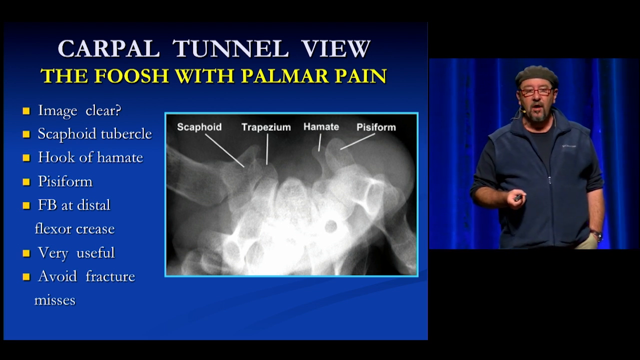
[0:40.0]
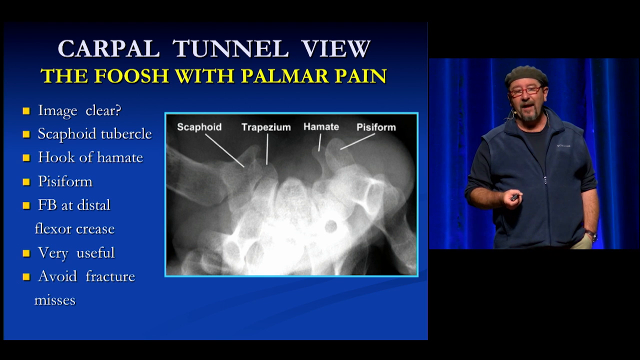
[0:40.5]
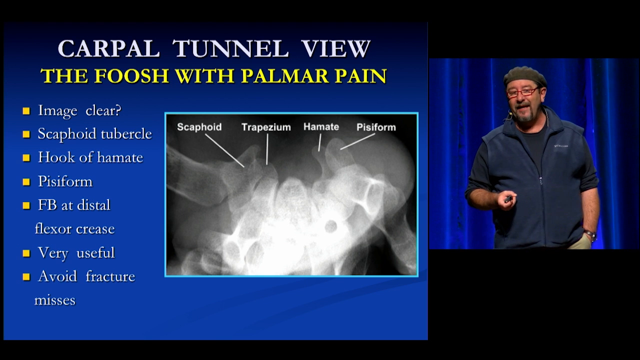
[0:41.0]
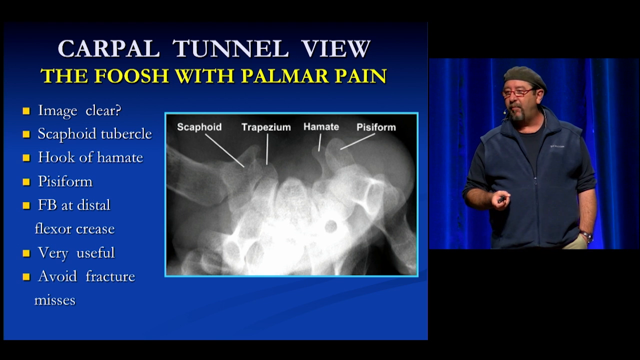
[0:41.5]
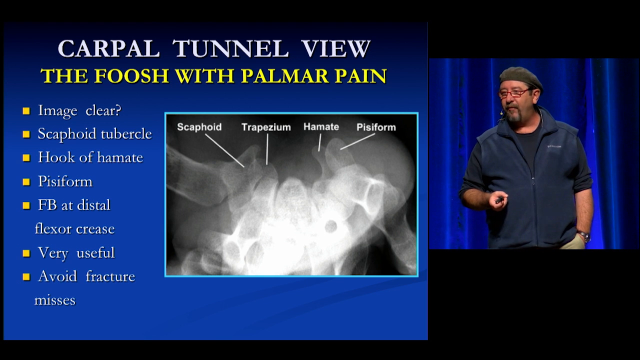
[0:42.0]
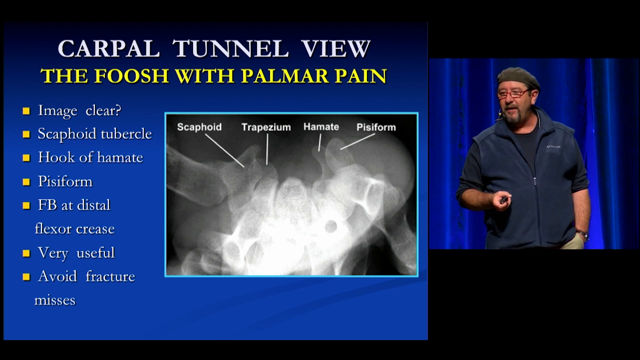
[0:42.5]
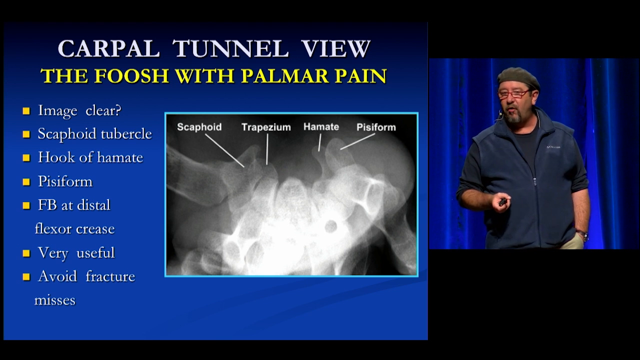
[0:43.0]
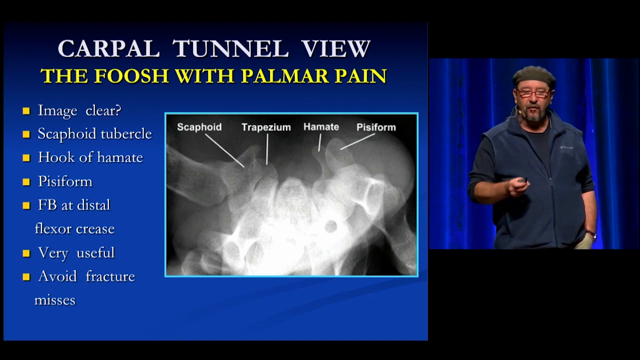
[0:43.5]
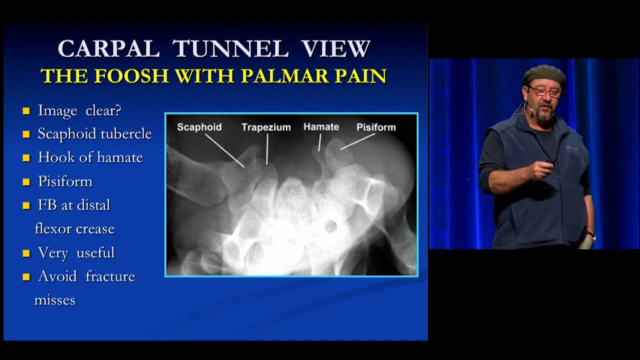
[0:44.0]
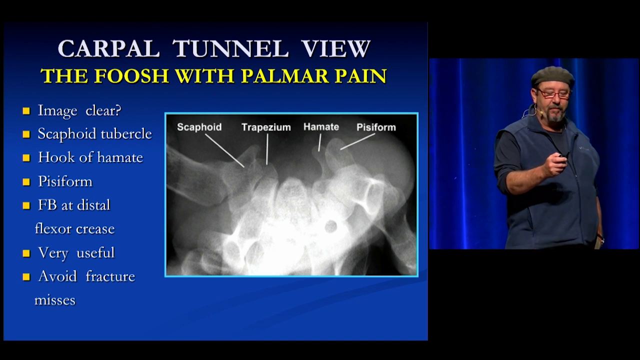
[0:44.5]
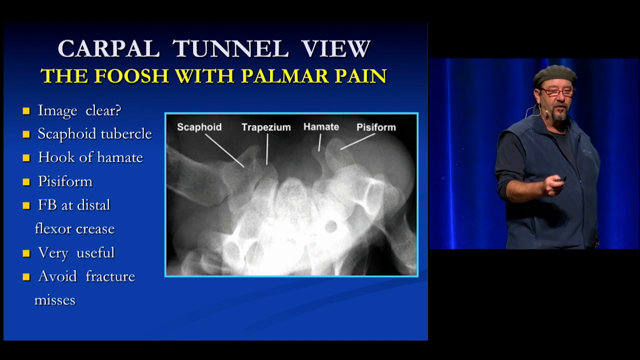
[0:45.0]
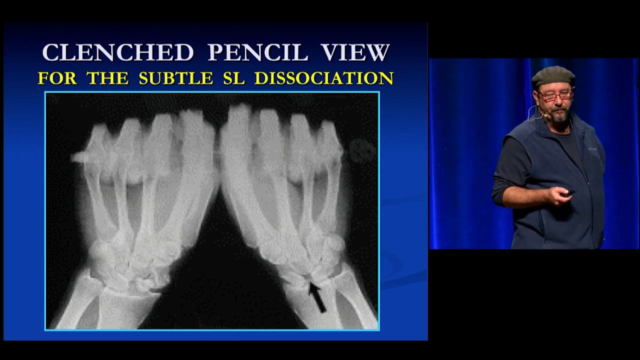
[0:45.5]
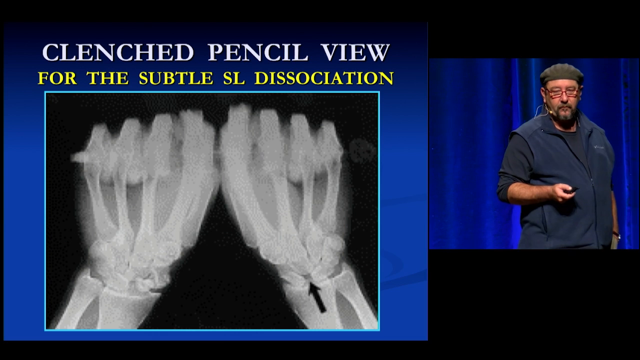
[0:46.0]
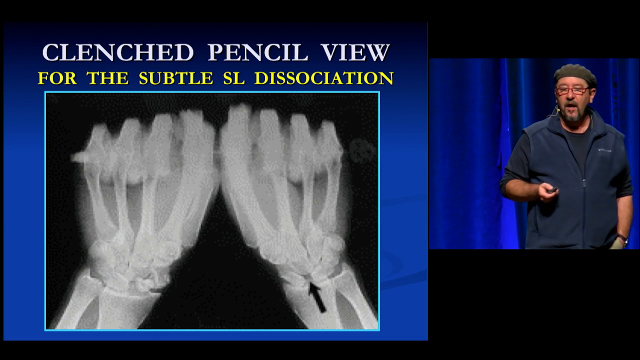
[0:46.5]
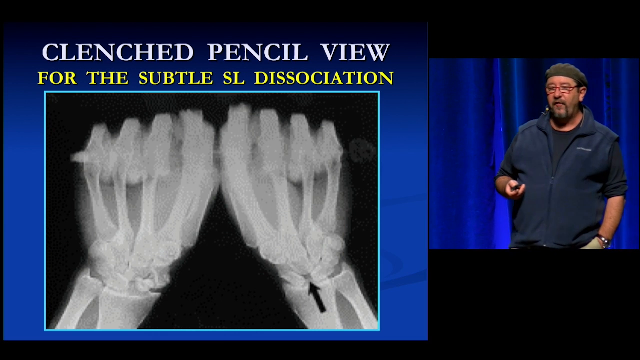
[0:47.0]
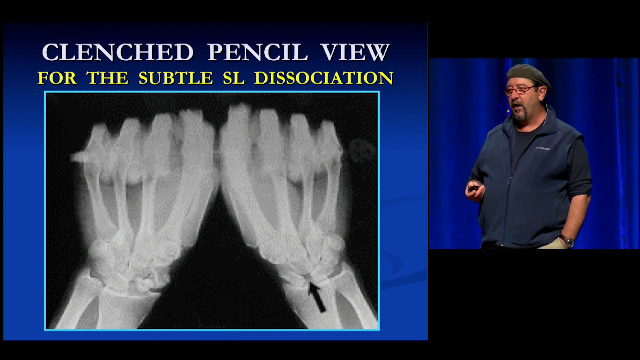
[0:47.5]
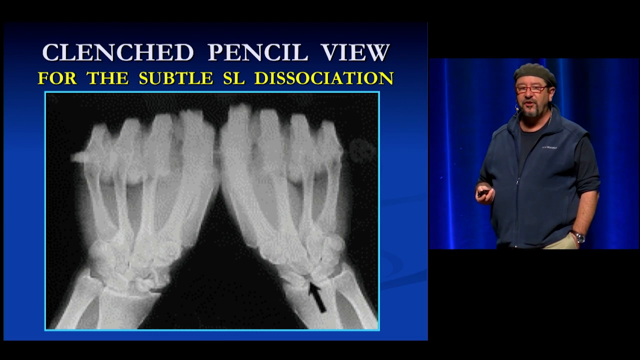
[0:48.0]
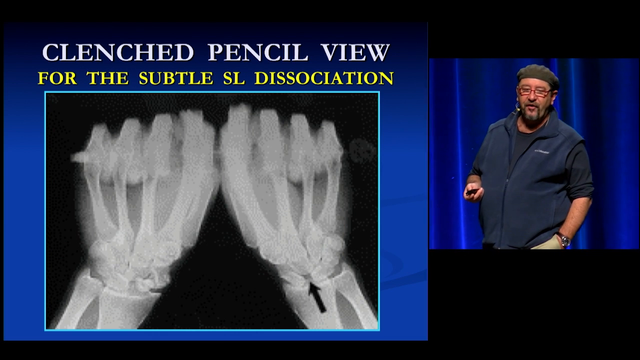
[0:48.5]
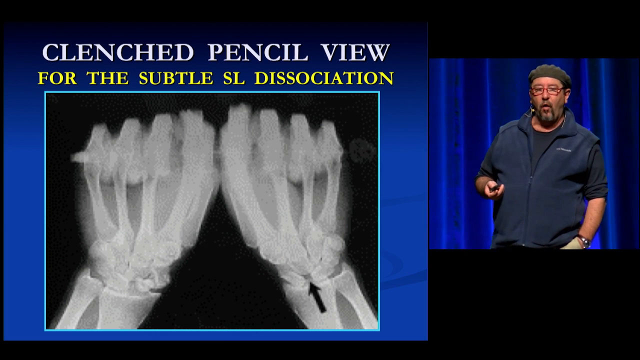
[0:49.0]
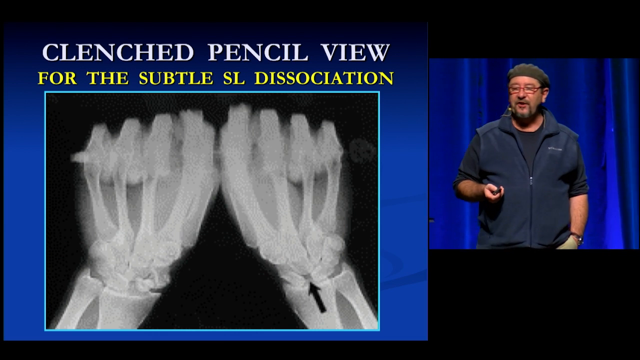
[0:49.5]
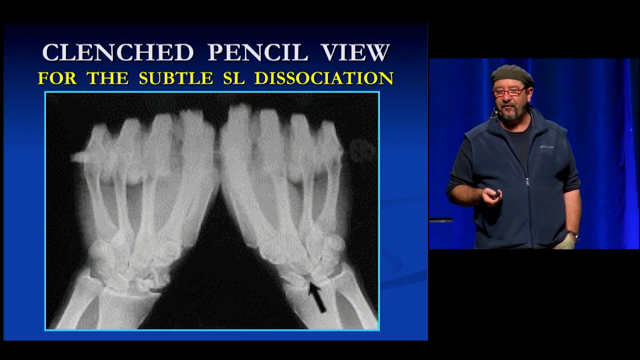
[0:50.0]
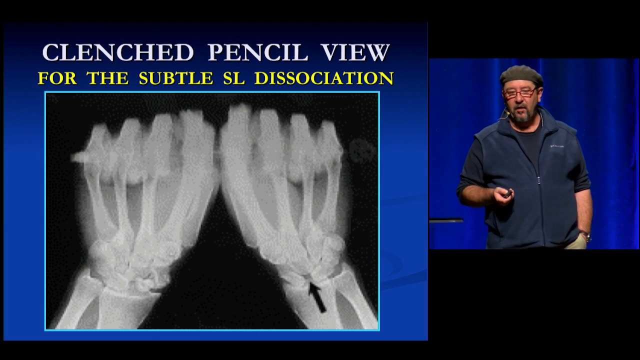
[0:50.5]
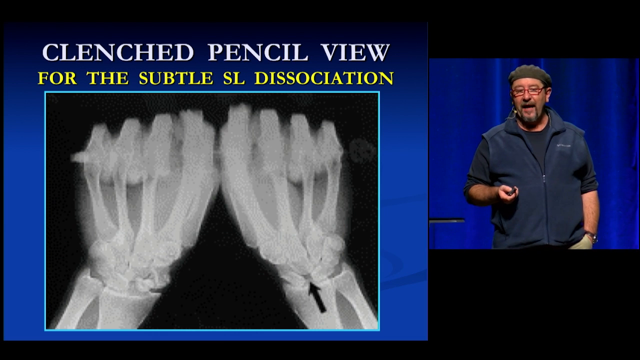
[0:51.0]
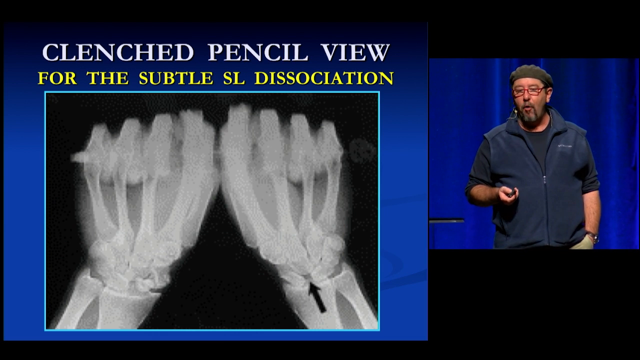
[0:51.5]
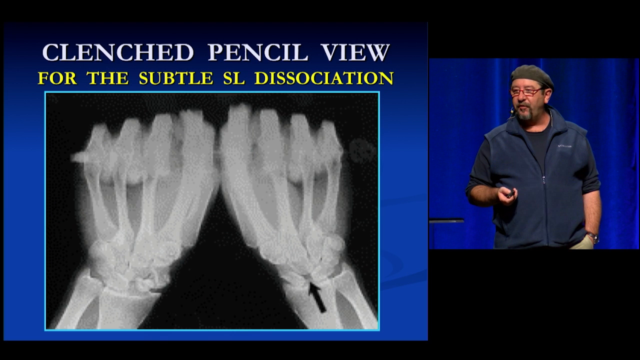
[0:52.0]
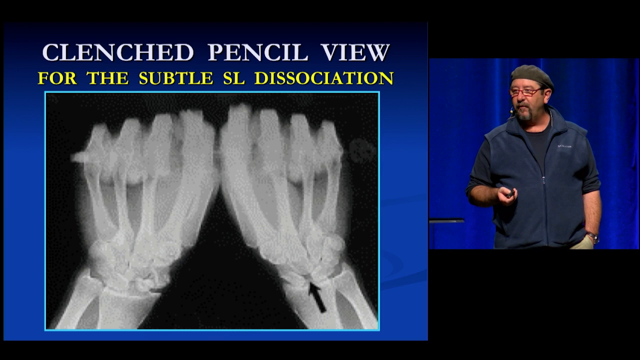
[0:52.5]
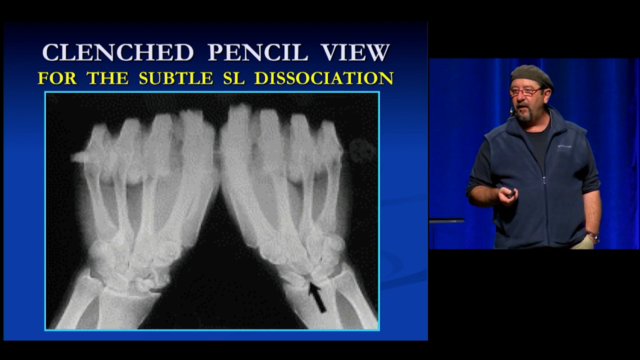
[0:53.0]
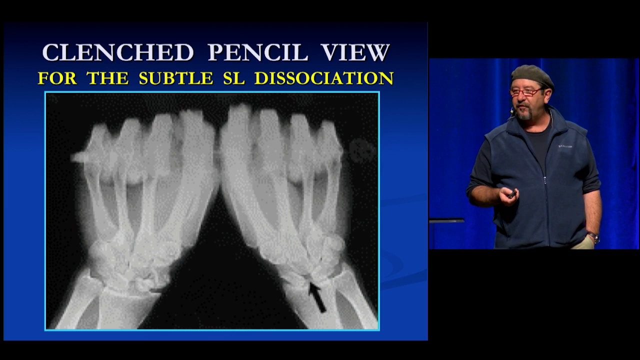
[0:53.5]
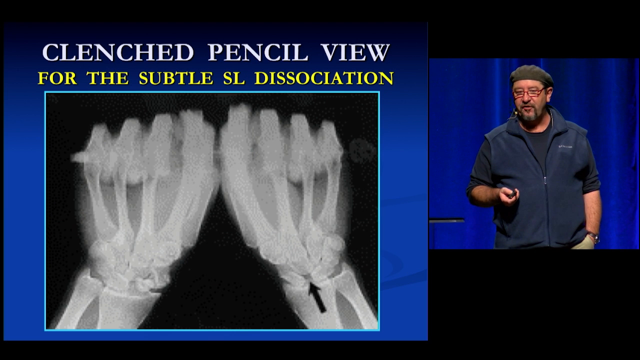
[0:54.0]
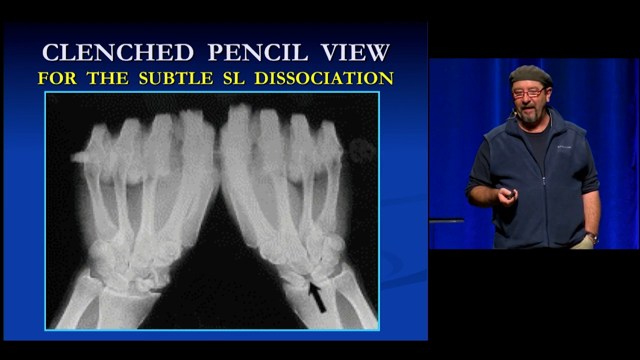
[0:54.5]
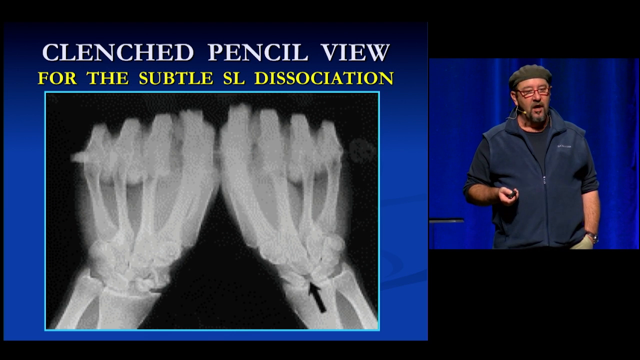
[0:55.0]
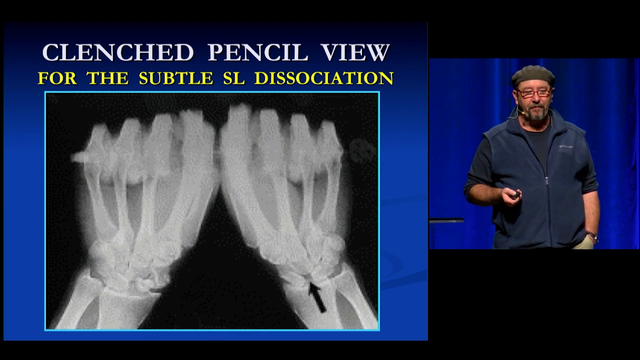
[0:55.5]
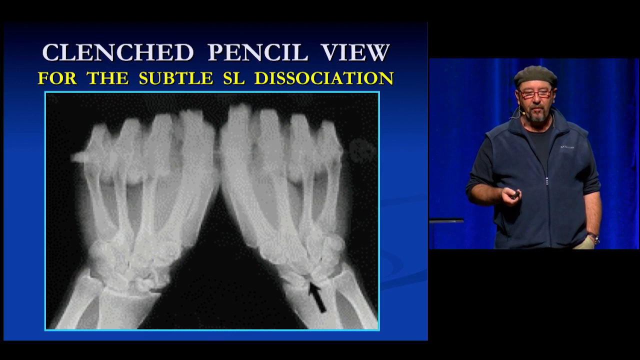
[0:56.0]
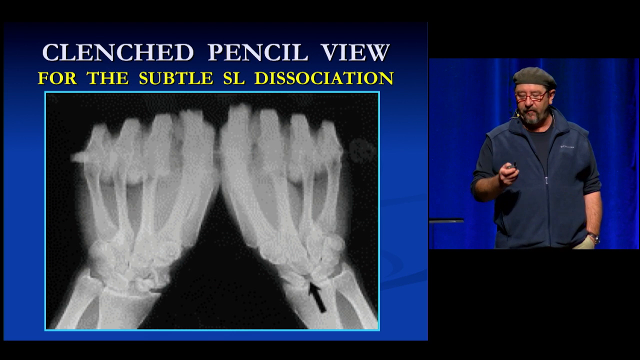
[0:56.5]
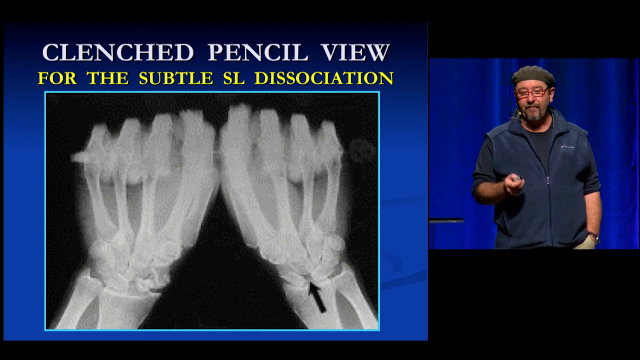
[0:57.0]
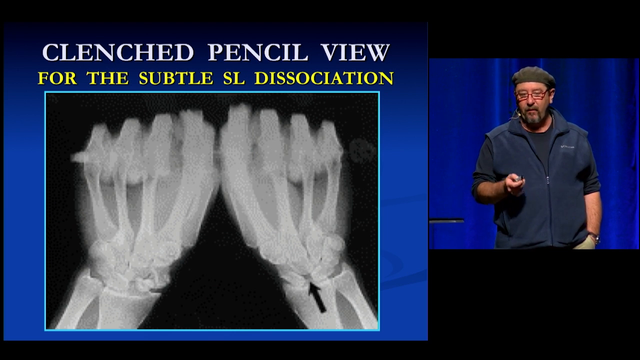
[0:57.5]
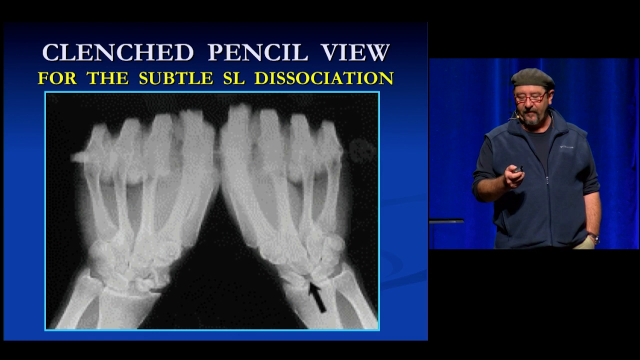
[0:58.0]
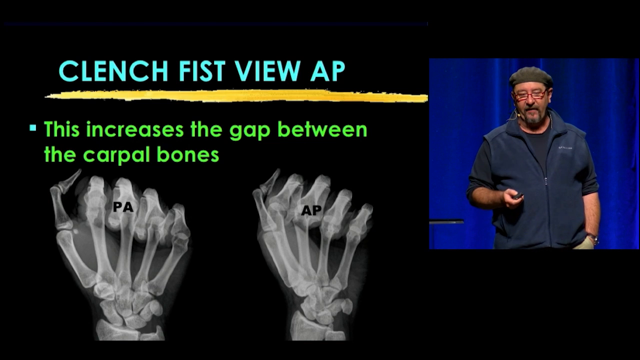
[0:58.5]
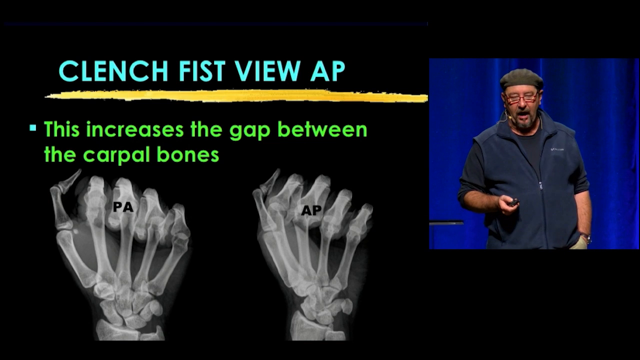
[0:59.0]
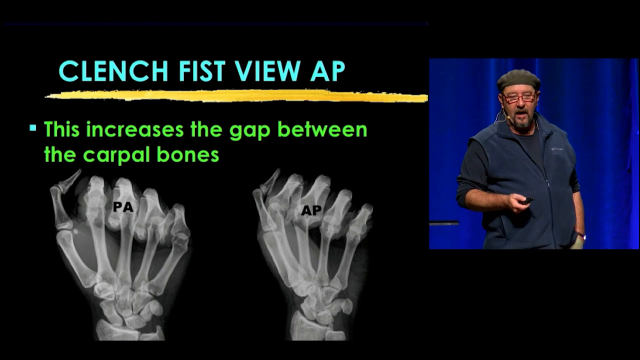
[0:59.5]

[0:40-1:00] The next slide reads "clenched pencil view for the subtle SL dissociation" and shows an x-ray image of two hands that look like they are holding on to something, showing the hand bones and the wrists. On the right wrist, a black arrow points to a gap in the bone formation. In the video, the host paces on the stage with one hand still up, holding the remote. He presses it and the slide changes to "clenched fist view AP". This slide has a yellow underline under the title and one bullet point reading "this increases the gap between the carpal bones". The hand on the left has "PA" on it and the hand on the right has "AP" on it.